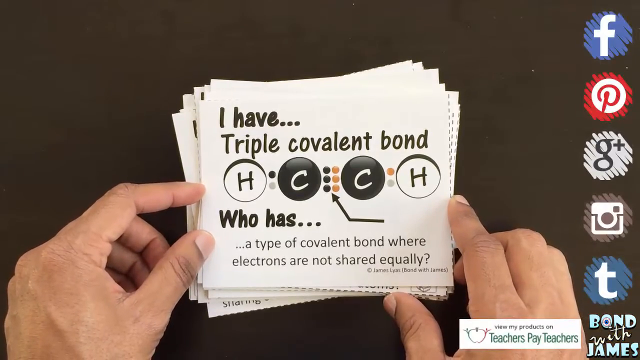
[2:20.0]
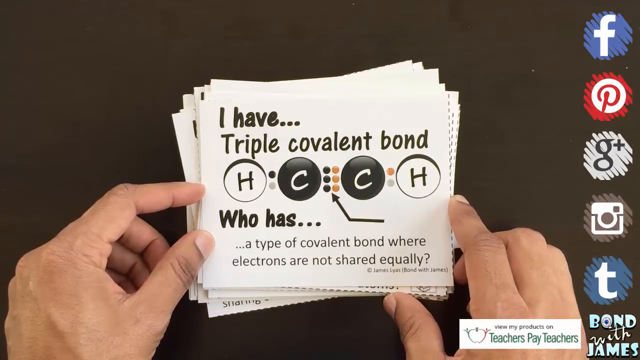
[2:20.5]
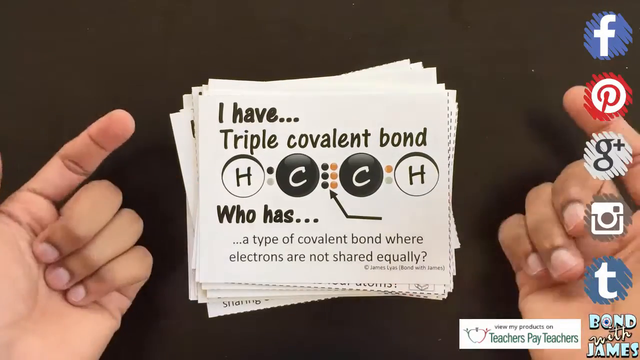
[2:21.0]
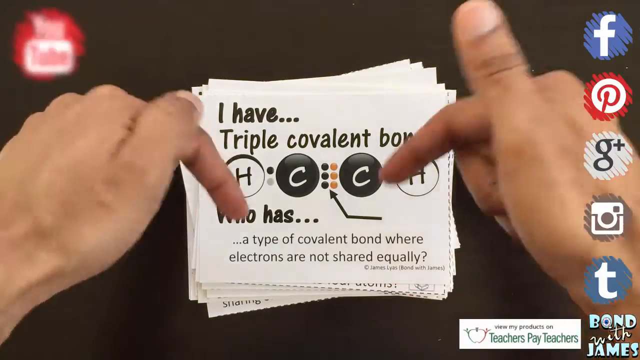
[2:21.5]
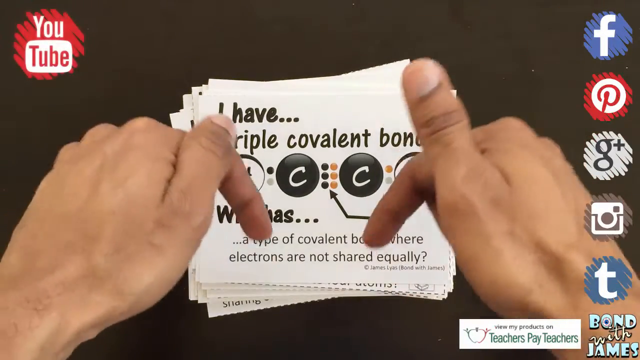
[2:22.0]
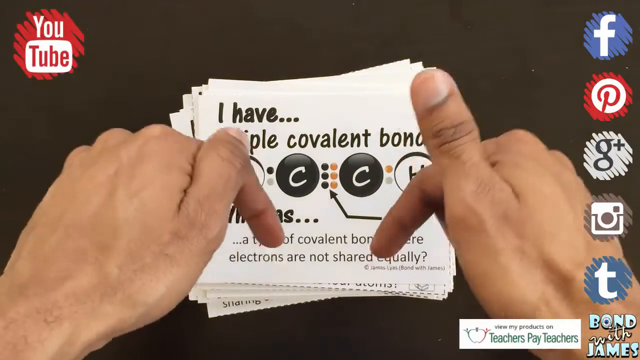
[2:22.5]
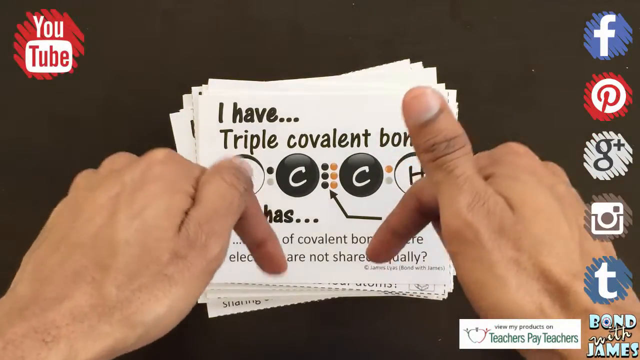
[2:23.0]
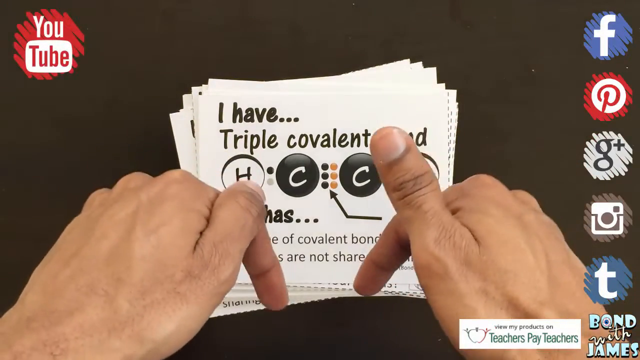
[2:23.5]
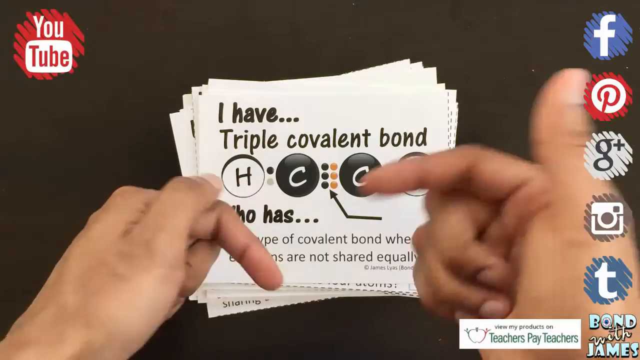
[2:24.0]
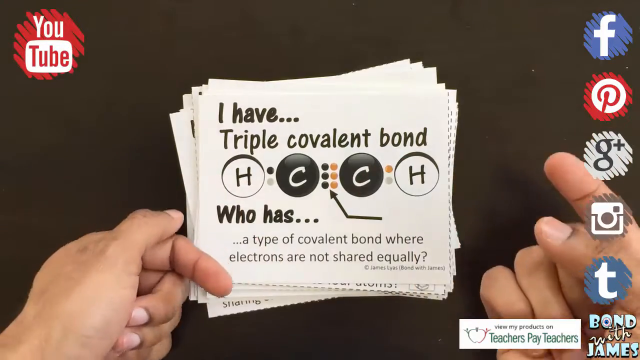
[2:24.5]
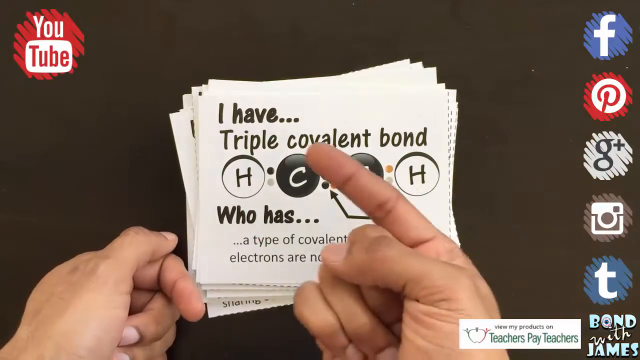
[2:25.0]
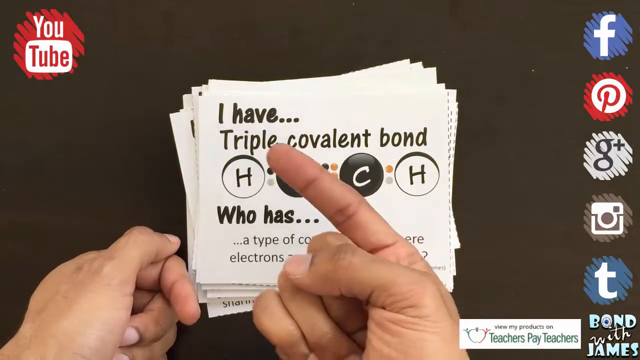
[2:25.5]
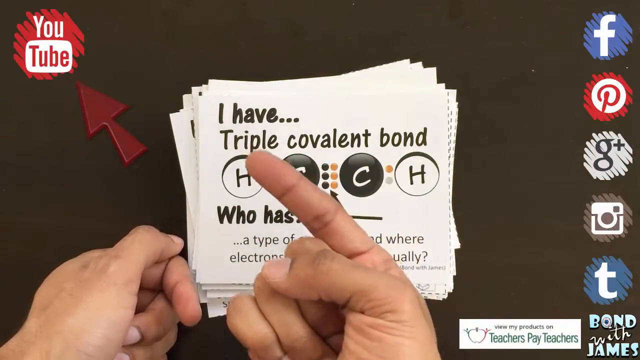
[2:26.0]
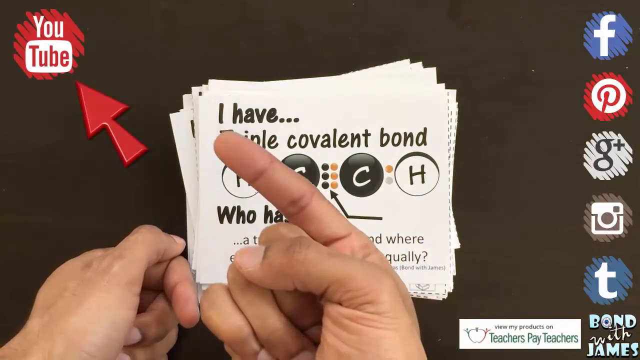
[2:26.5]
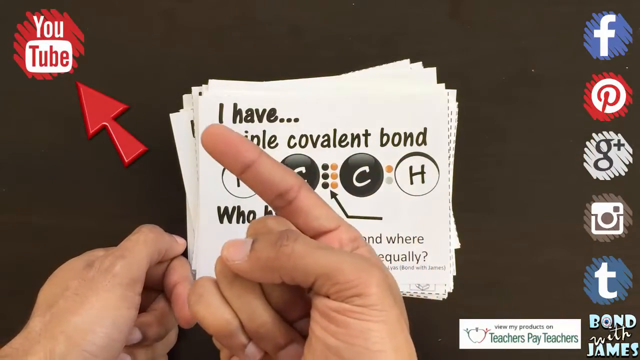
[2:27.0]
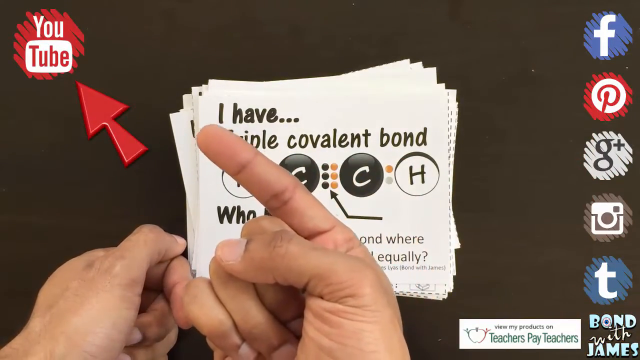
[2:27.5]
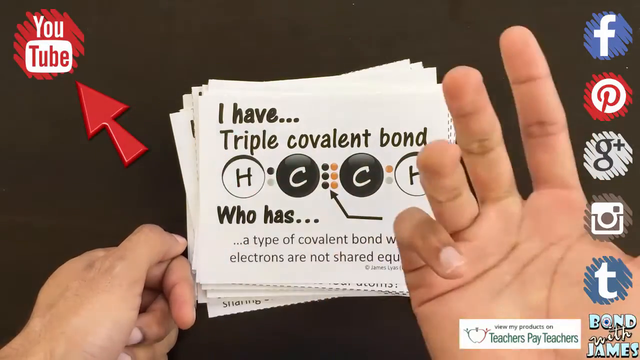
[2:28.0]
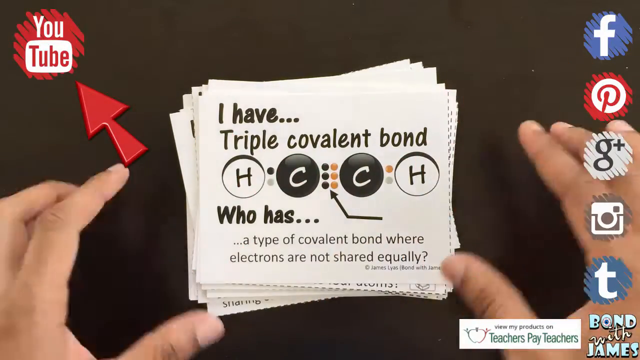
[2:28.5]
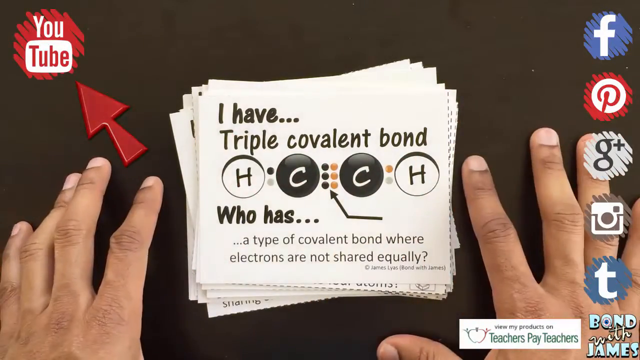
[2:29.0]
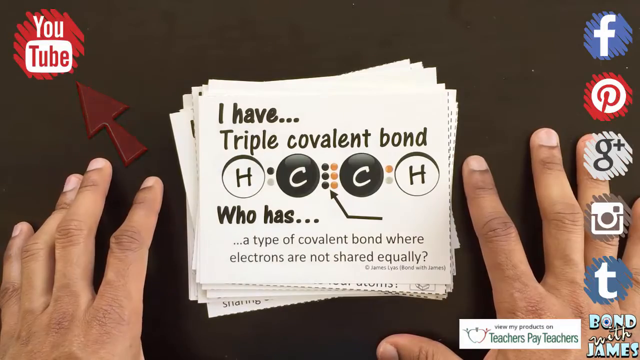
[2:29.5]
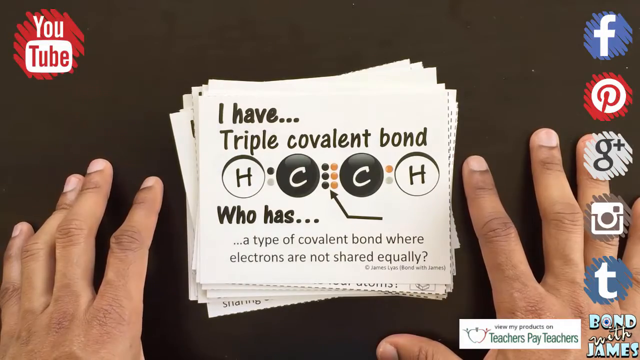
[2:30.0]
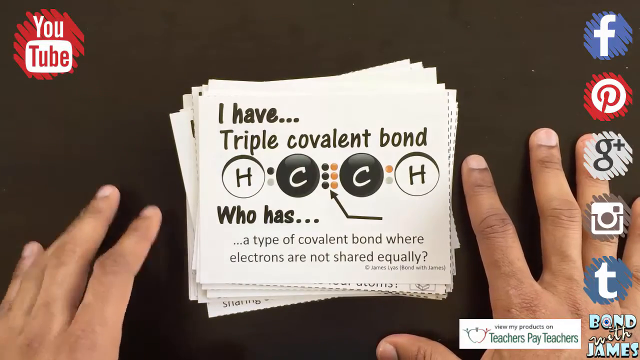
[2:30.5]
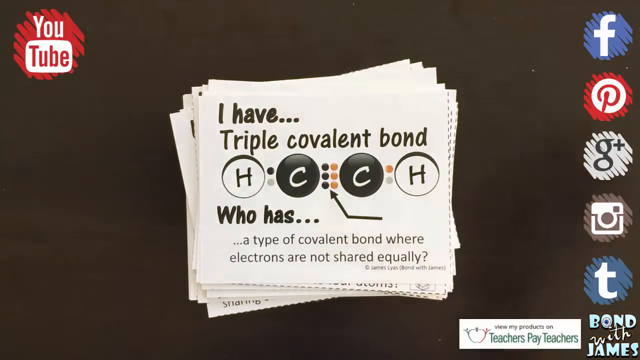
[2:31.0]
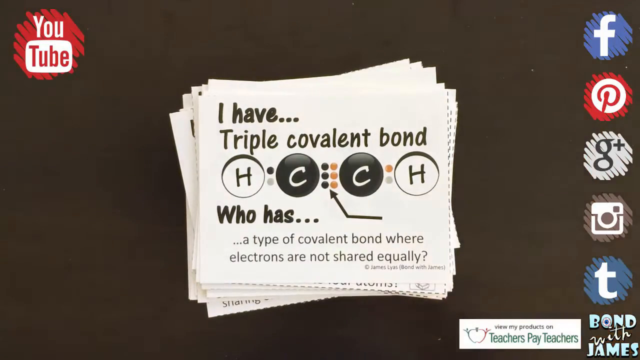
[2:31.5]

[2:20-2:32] The "I have triple covalent bond" card is shown, and the YouTube logo appears at the upper left of the video. On the right side are the Facebook logo, the Pinterest logo, Google, a camera sign and Twitter, and the word "bond" also appears. A red arrow points toward the YouTube logo. The "I have oxygen" card, "who has molecular prefix for the number six," is there, with the hands placed on the table. The person picks up that card, drops it, puts their hand back down on the table, and starts shuffling through the cards. They pick a card with six green circles numbered one to six, then shuffle through the other cards while making gestures with their hand. They put the hand back on the table and pick up the "I have hexa" card, which reads "who has the..."